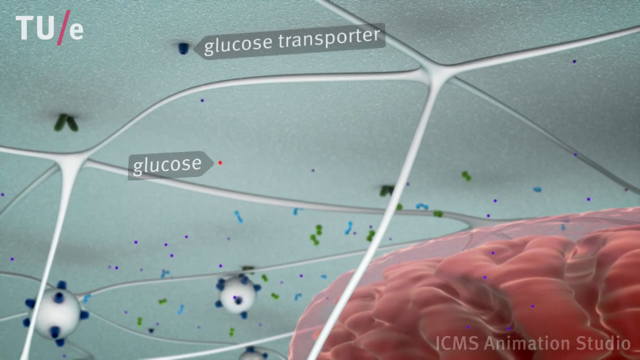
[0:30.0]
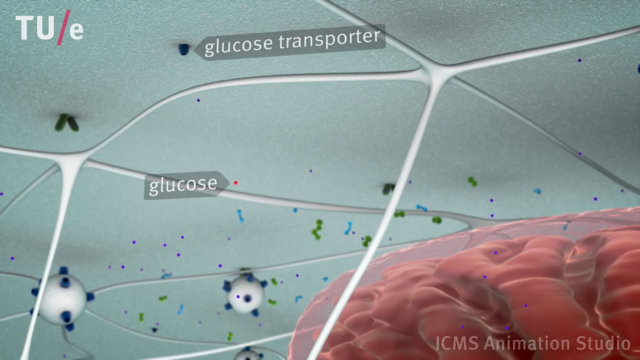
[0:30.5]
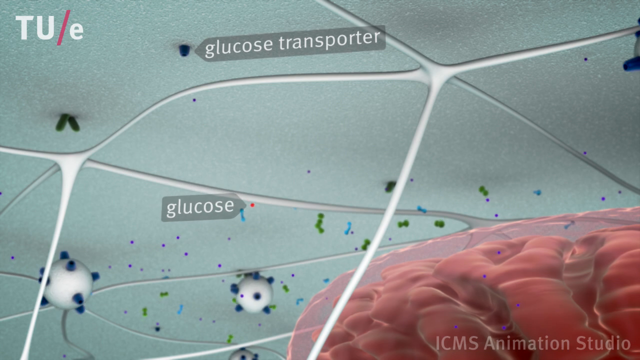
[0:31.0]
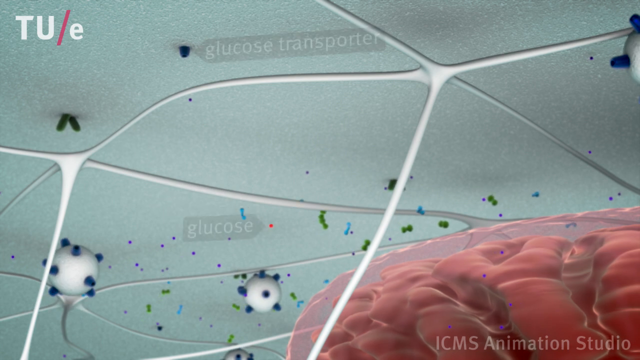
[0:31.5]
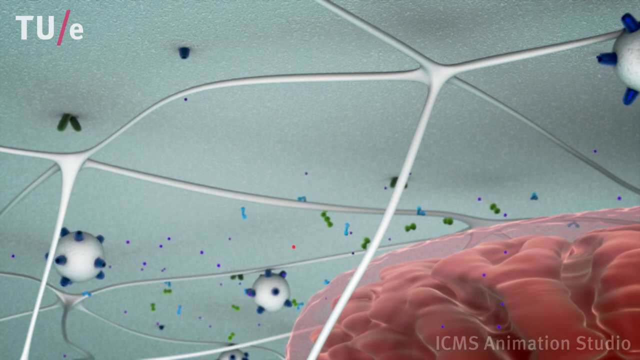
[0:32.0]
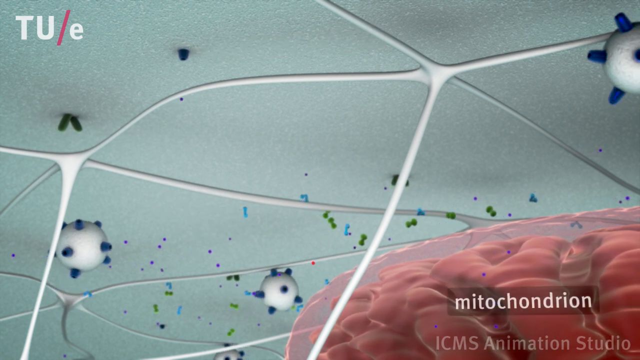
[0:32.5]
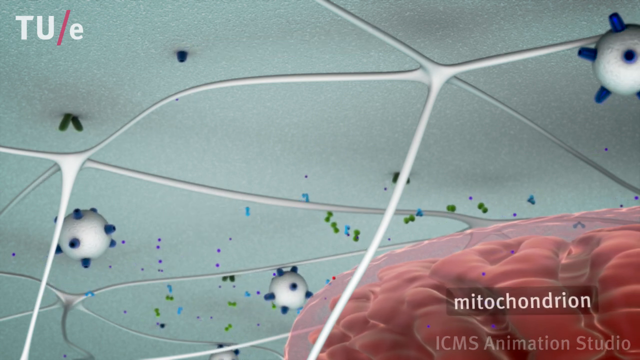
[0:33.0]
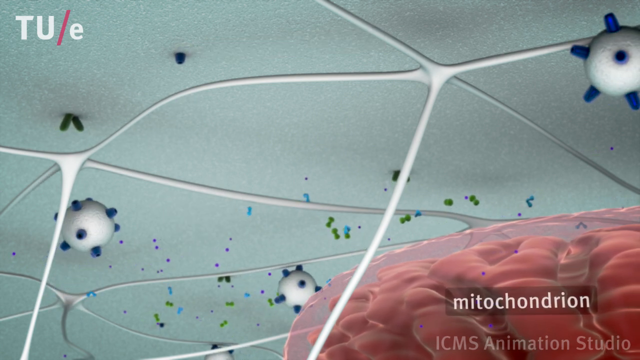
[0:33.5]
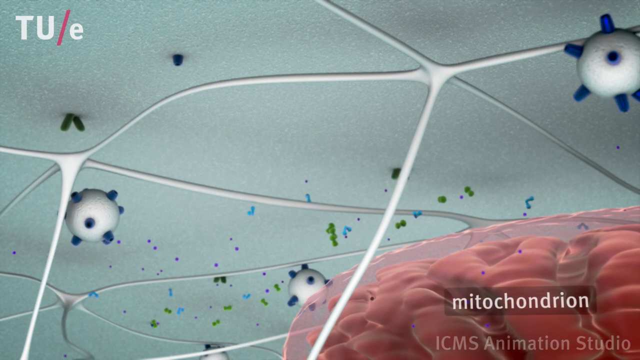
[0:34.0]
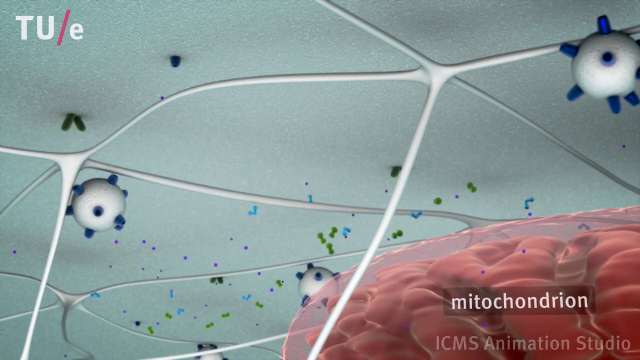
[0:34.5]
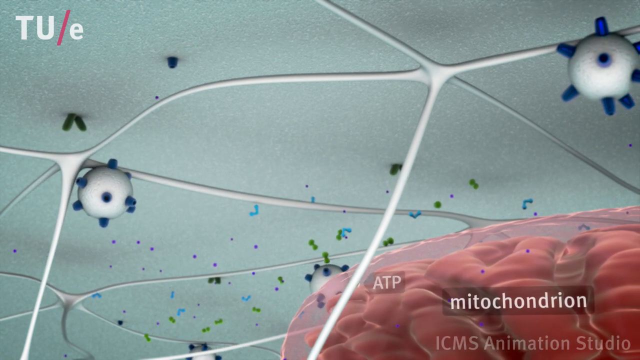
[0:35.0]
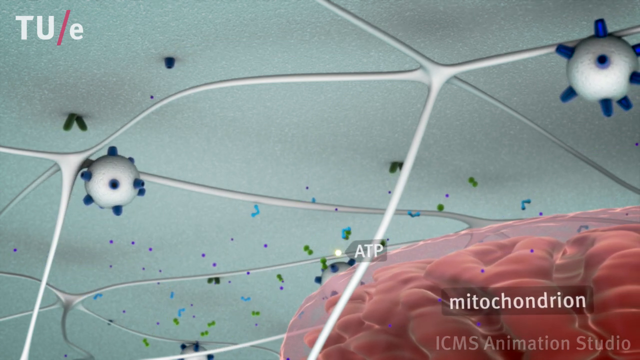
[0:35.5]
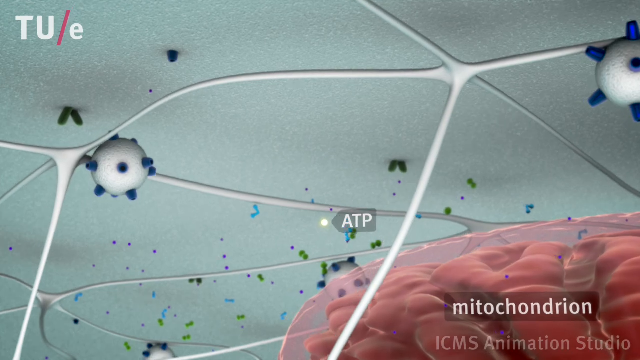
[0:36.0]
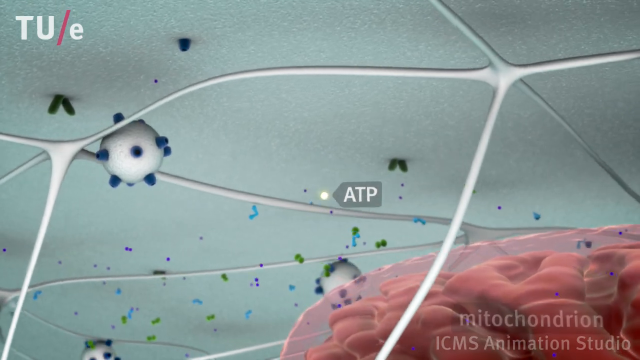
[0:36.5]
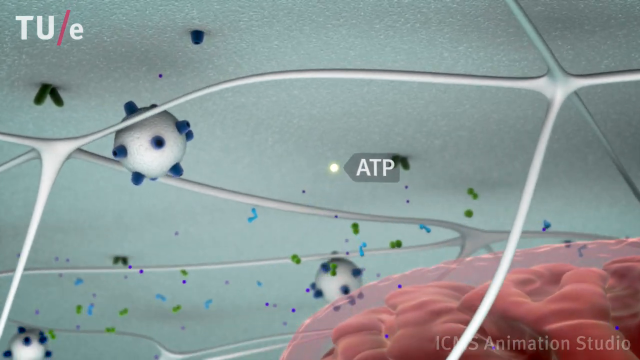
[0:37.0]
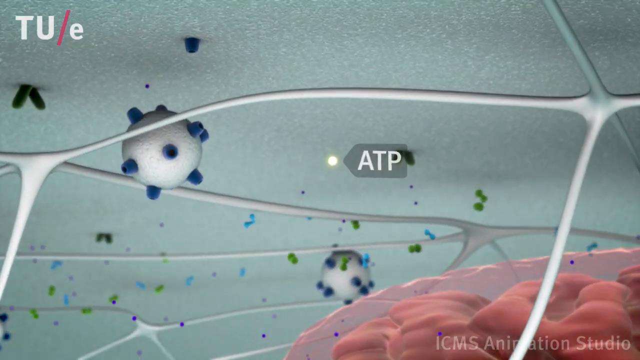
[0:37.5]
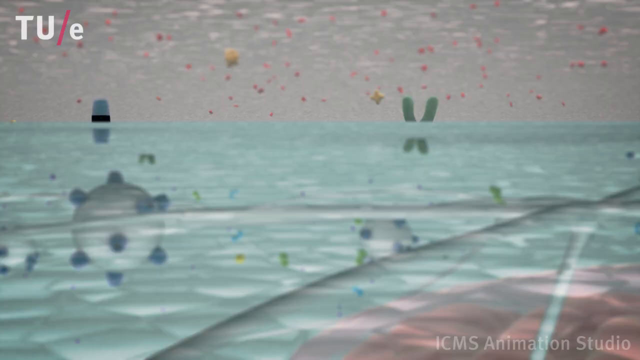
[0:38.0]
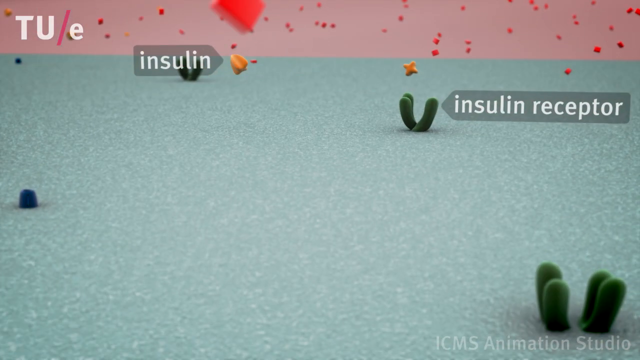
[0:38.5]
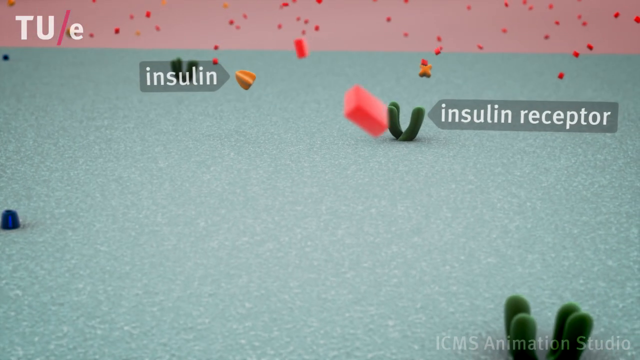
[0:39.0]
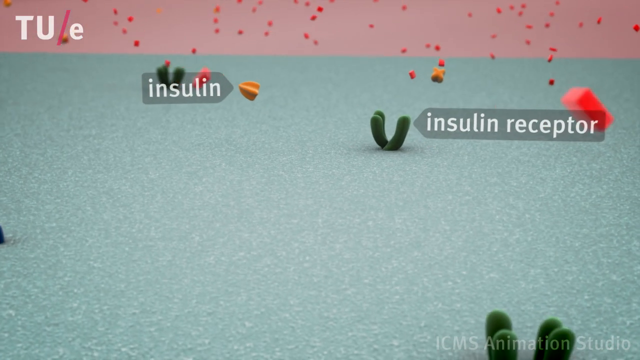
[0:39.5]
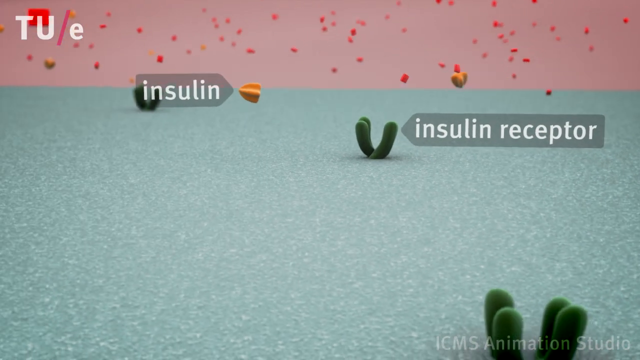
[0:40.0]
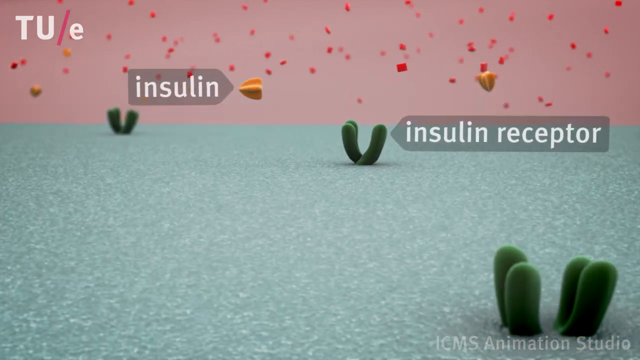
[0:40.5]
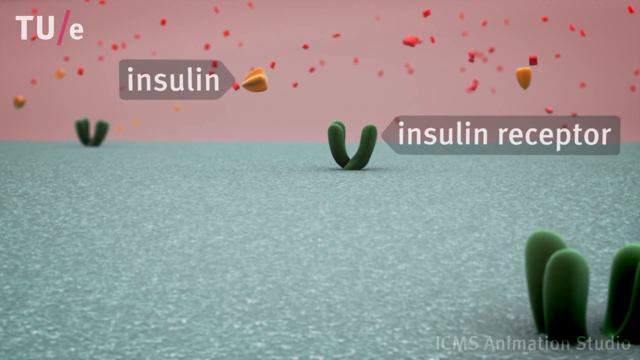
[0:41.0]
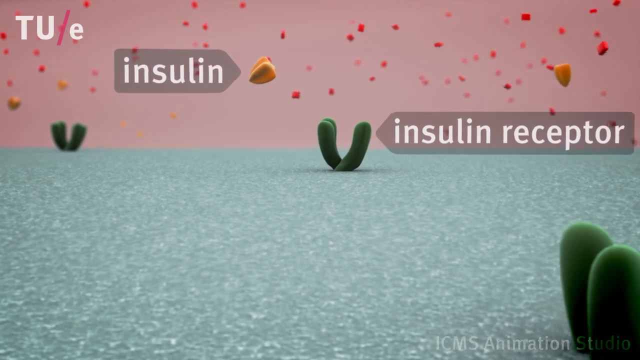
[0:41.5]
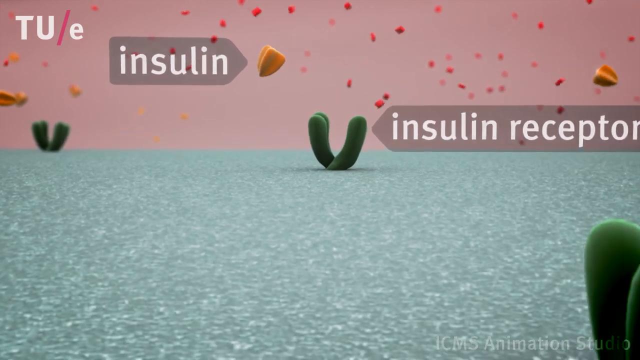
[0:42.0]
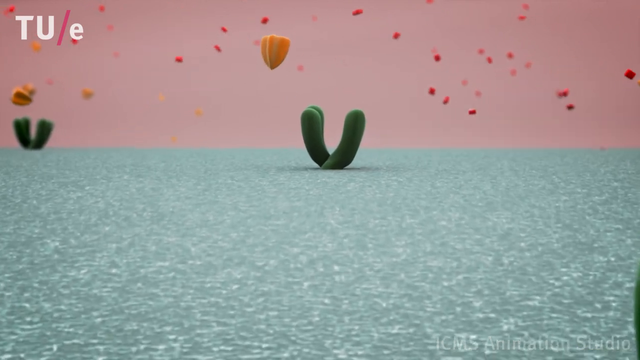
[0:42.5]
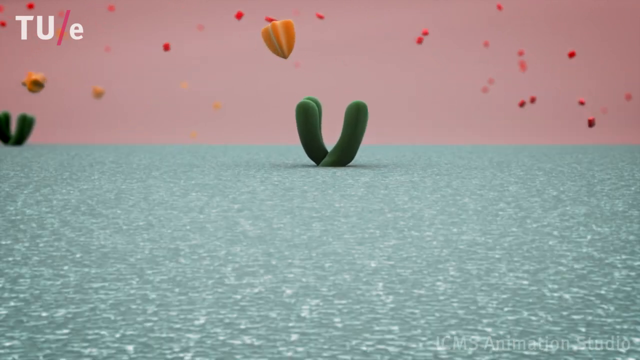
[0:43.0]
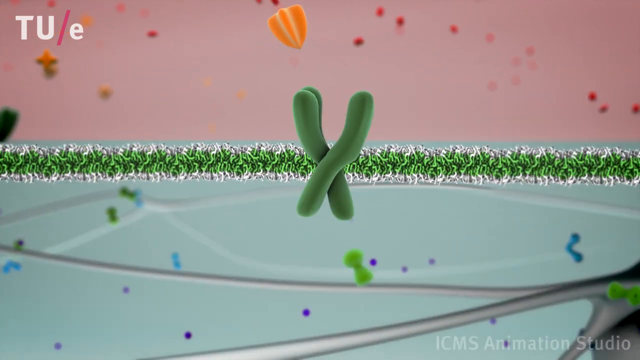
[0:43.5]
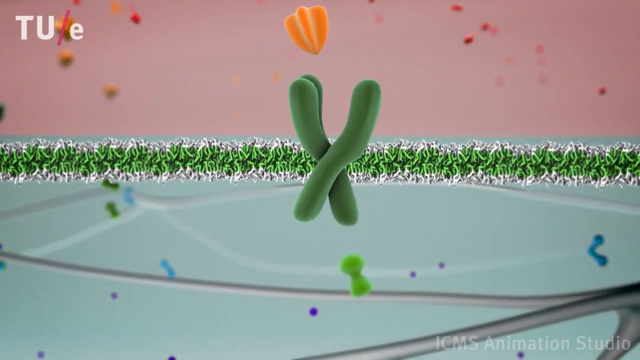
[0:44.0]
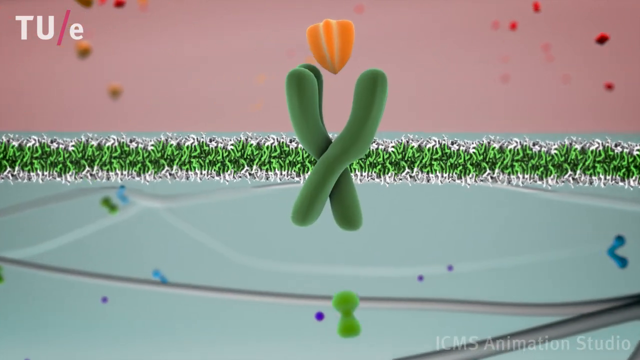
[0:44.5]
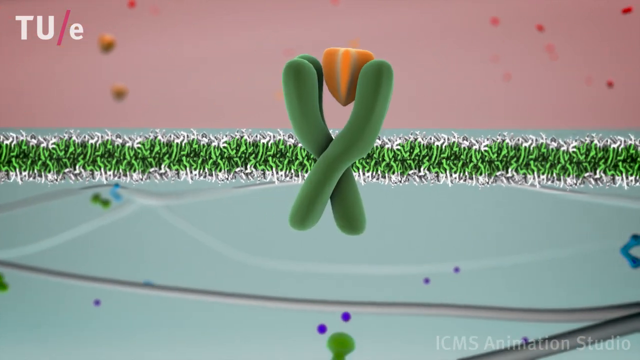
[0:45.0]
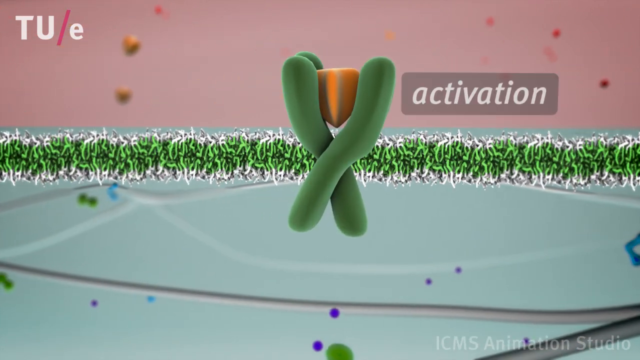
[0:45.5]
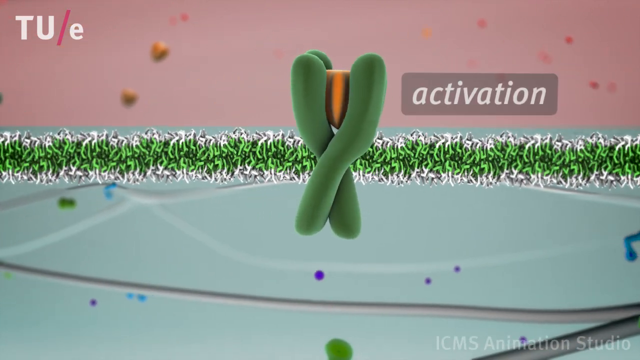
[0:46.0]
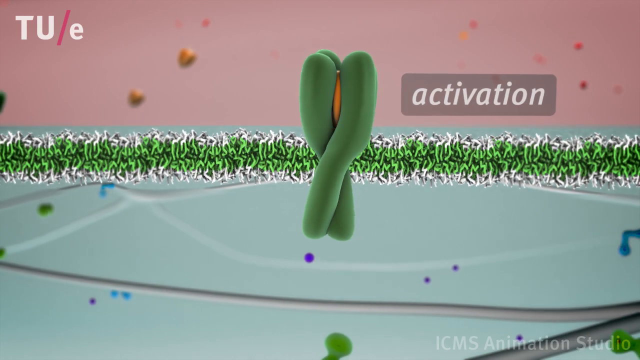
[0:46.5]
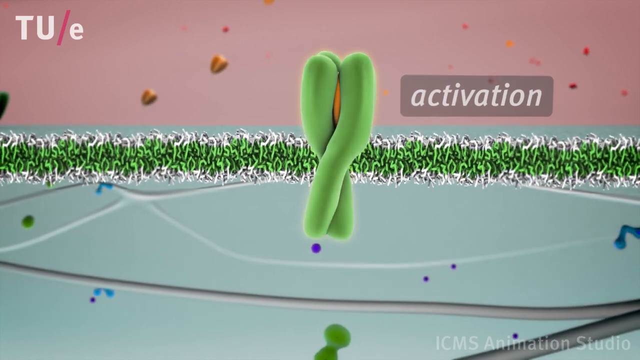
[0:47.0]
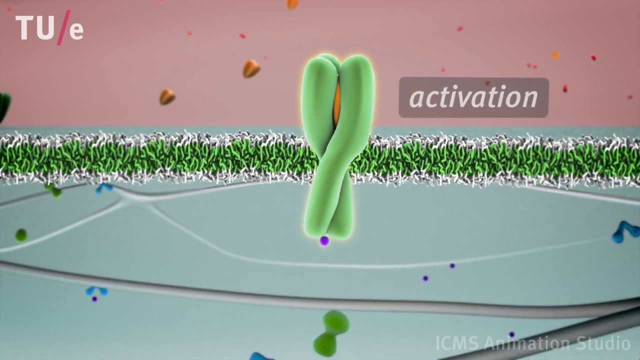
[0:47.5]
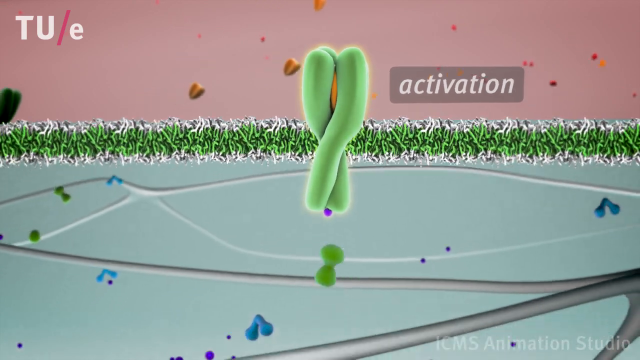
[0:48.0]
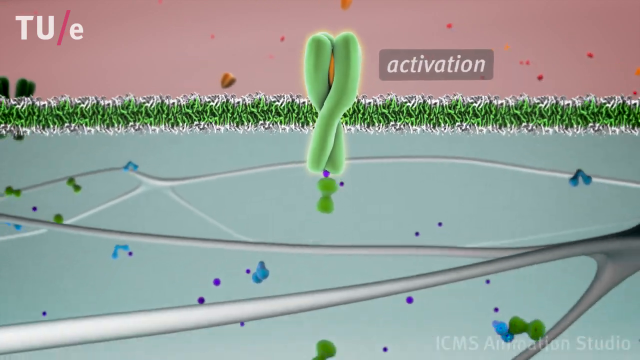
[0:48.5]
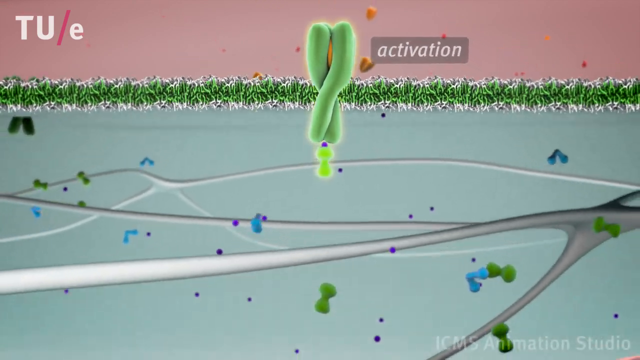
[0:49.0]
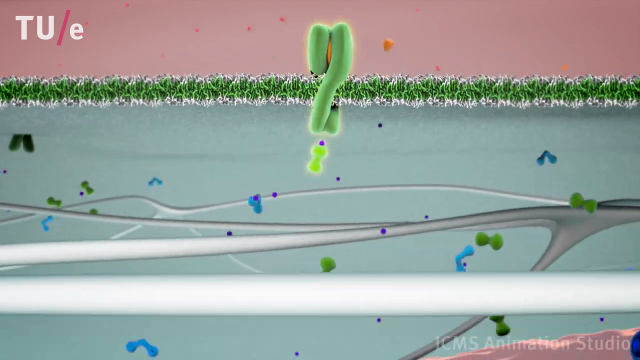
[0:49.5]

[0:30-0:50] A view credited to the technology university shows the glucose transporter and glucose moving through the body. Cells of different shapes appear, along with ATP, insulin receptors and insulin, and an activation takes place. The diagram, a simplified depiction, looks almost like a road map or highway, and mitochondria move along it together with the insulin and insulin receptors.